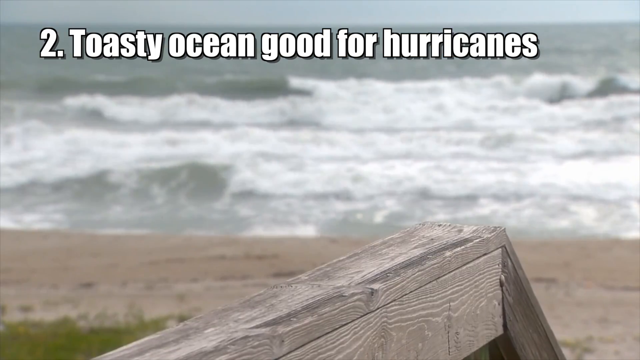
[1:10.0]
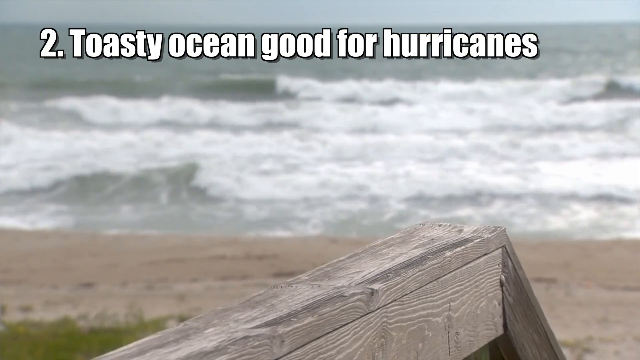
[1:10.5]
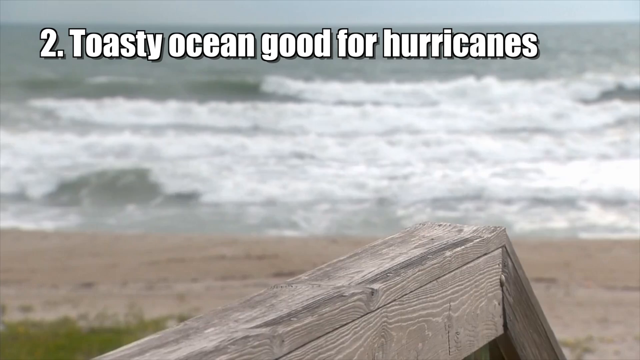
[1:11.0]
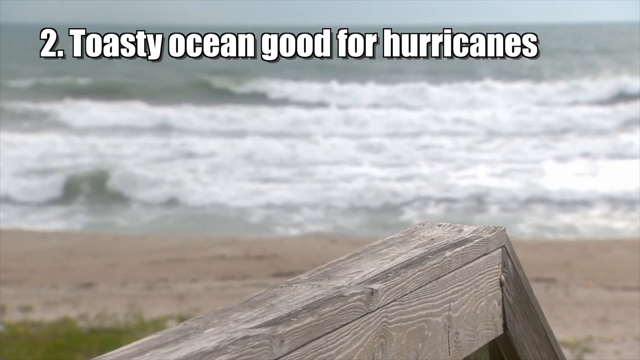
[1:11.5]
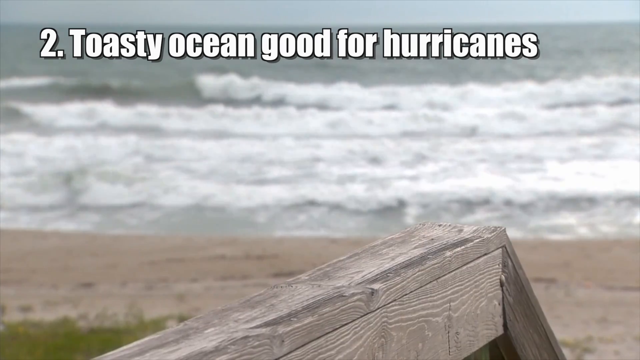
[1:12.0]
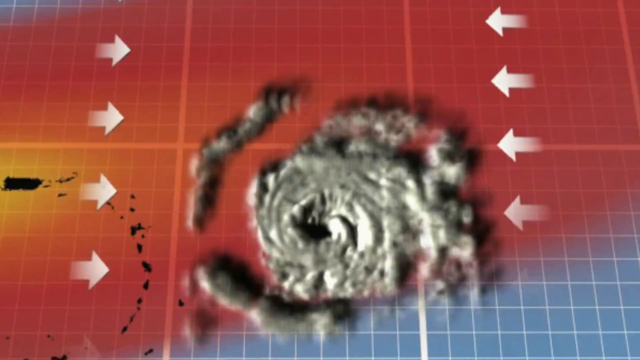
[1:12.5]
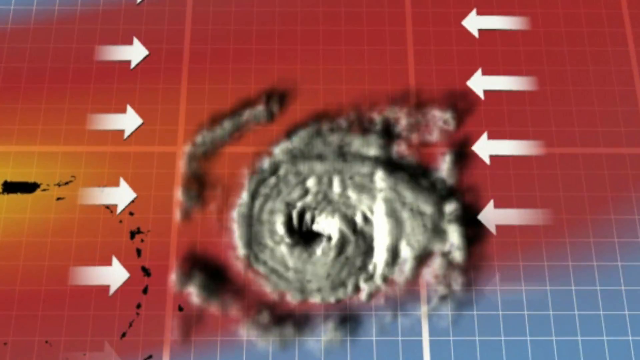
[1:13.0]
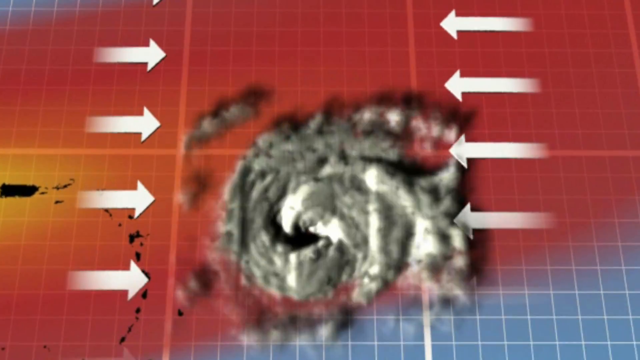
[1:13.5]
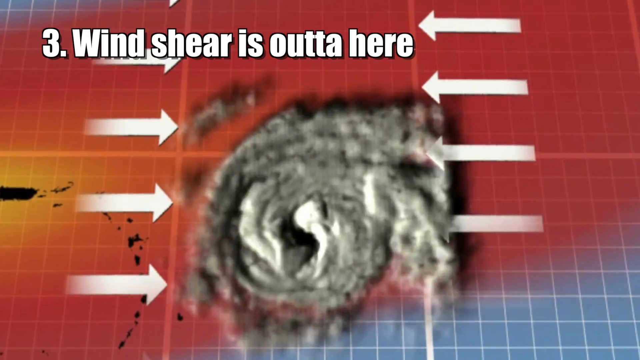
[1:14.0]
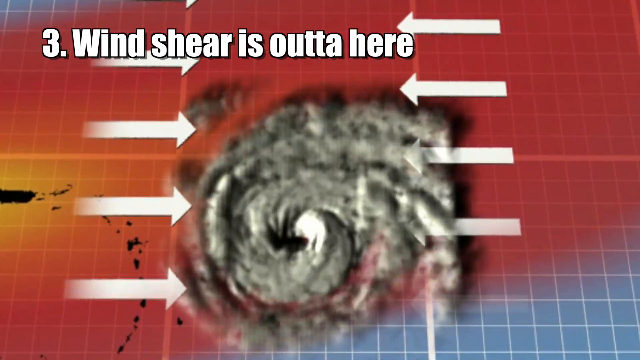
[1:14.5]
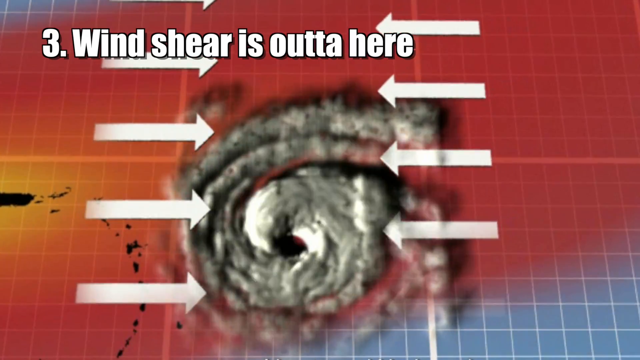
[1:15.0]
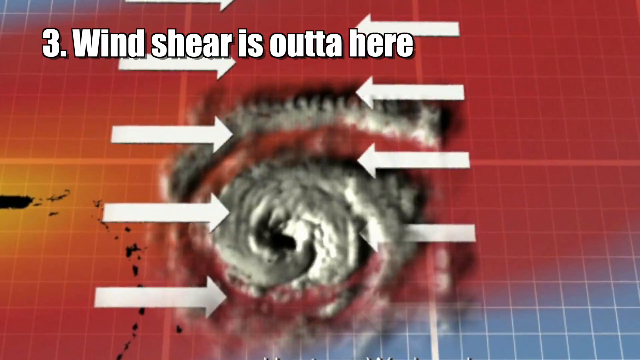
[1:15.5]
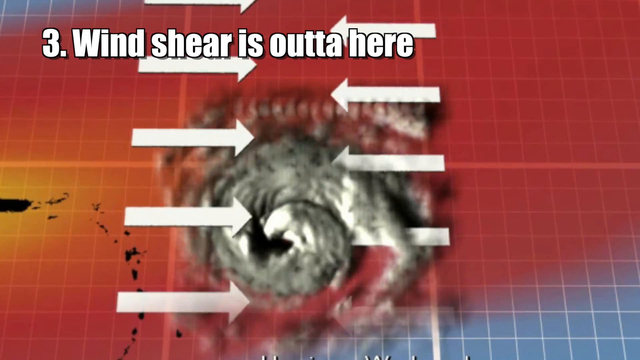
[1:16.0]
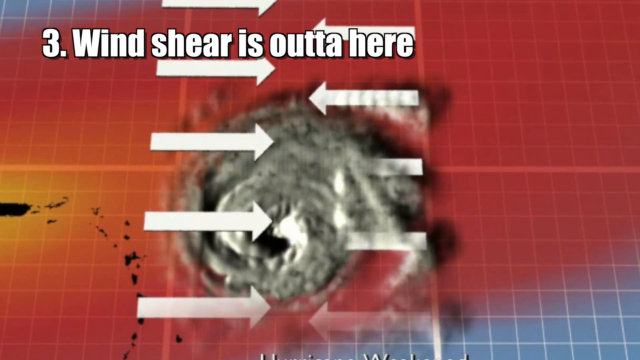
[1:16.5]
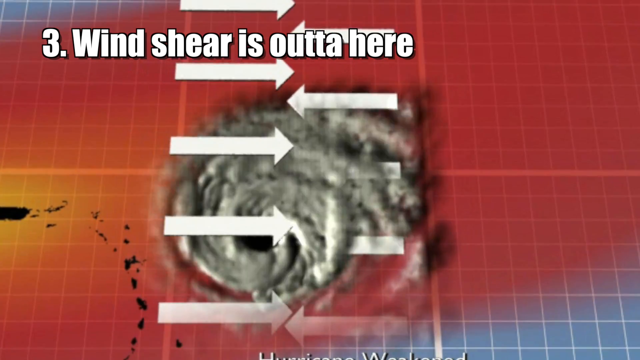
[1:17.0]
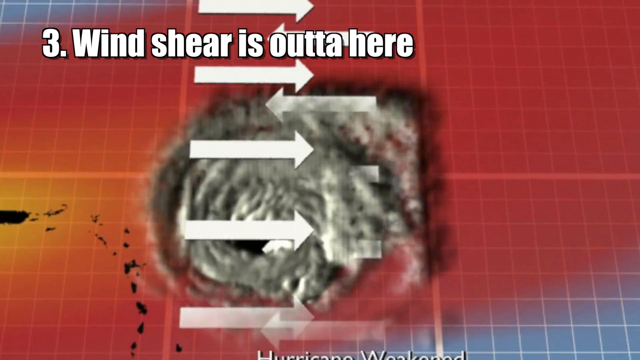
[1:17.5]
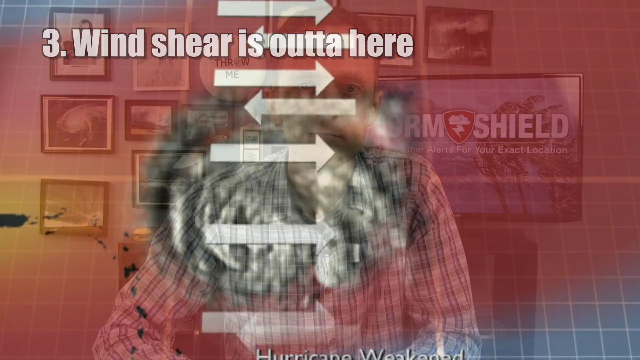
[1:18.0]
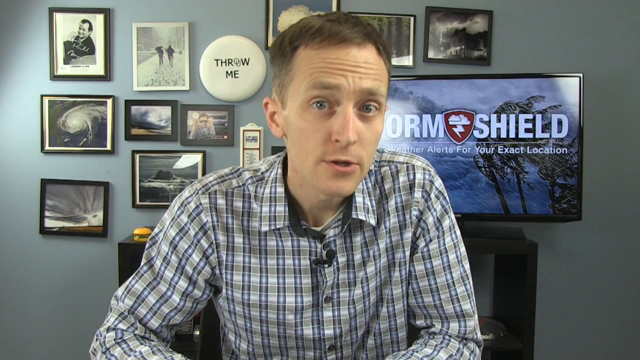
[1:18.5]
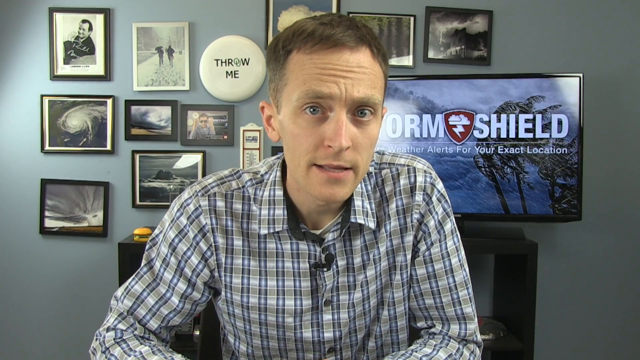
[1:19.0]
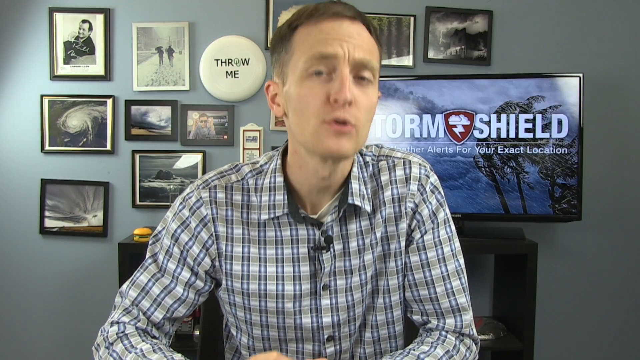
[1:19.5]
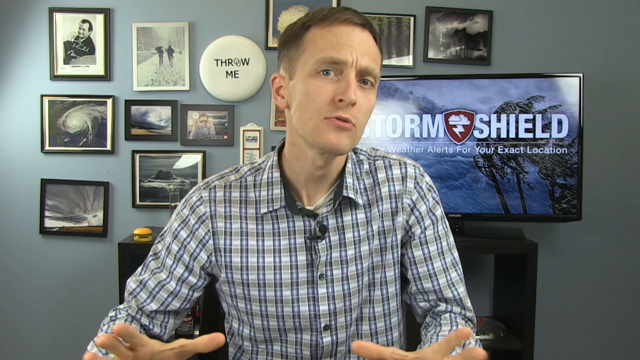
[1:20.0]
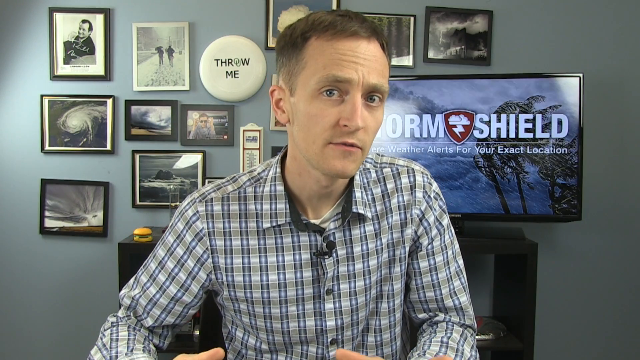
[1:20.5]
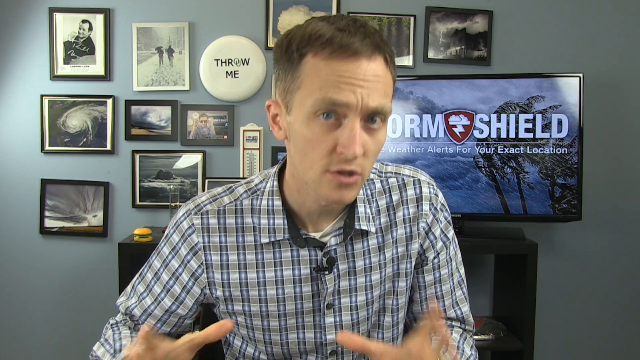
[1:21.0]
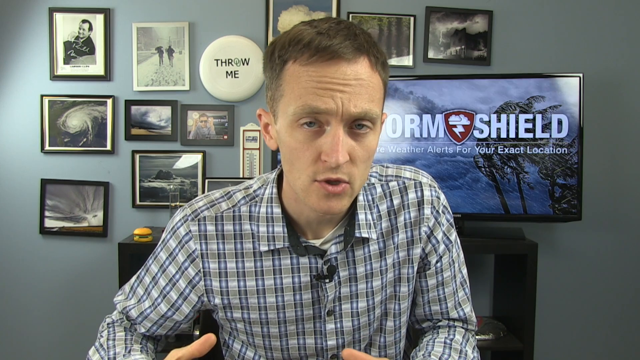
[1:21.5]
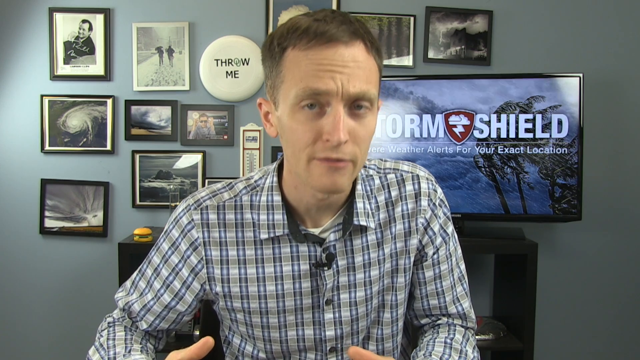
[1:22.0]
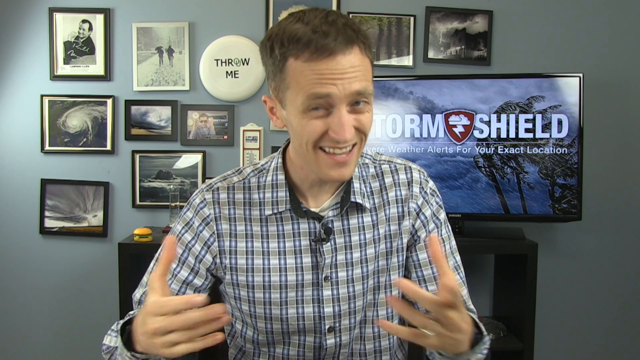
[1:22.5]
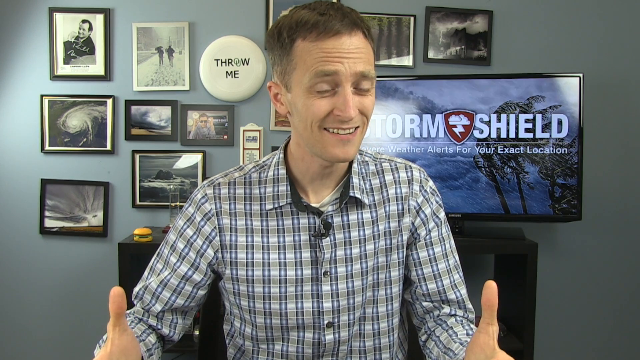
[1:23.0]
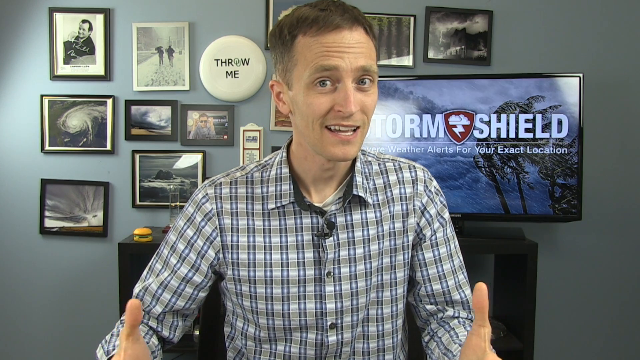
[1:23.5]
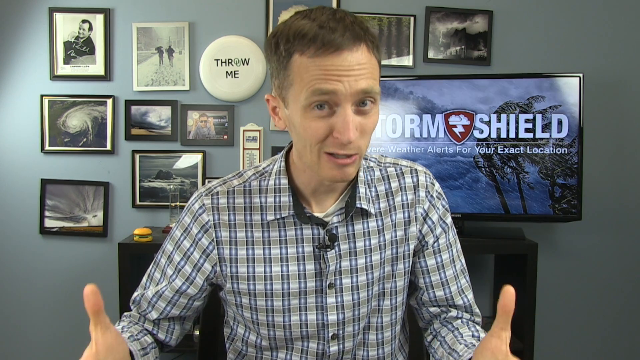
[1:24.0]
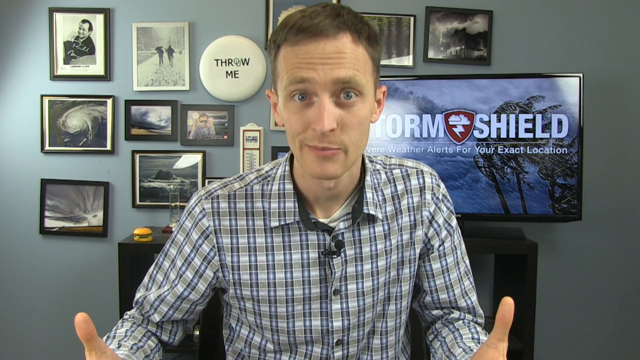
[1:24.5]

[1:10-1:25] The video starts with the toasty ocean good for hurricanes, then goes to another graphic showing wind shear as arrows converging on a hurricane graphic from both the left and right, with "3. wind shear is out of here" over the top. The screen then returns to meteorologist Jason Myers, who speaks animatedly, moving his hands, leaning into the camera and making facial expressions. In the lower right corner is a Storm Shield icon, apparently indicating the video's sponsor.